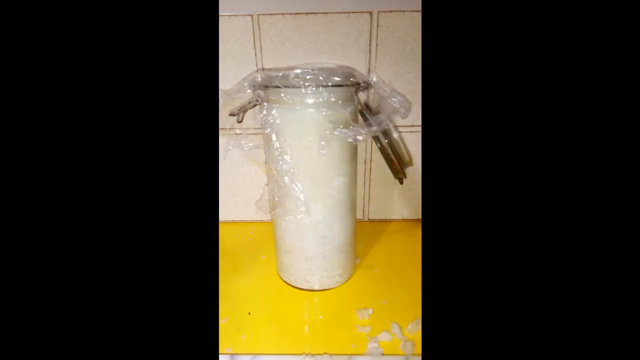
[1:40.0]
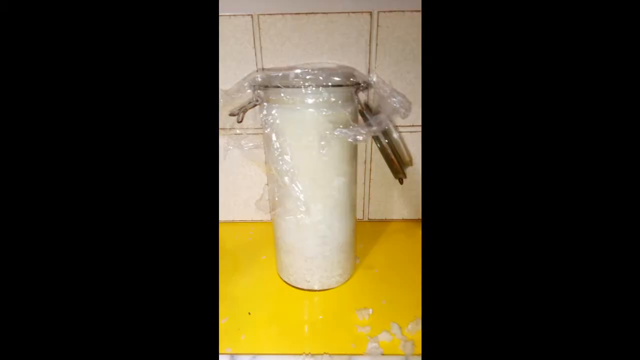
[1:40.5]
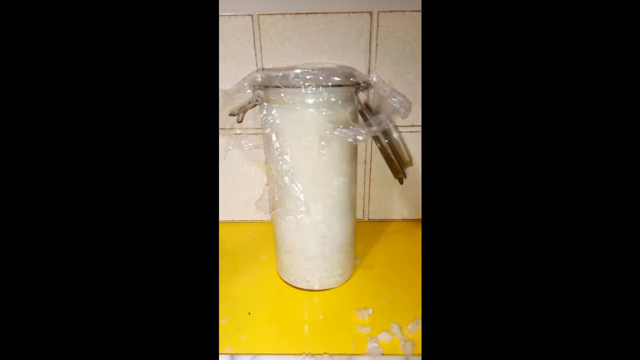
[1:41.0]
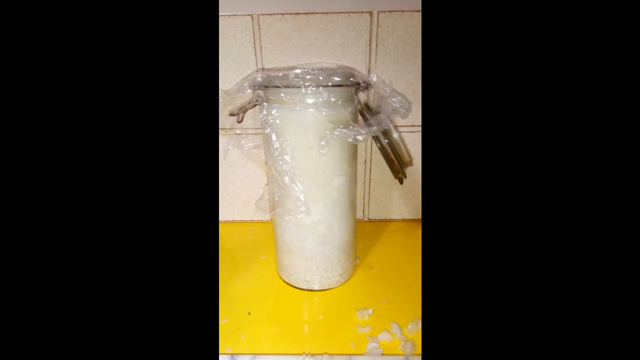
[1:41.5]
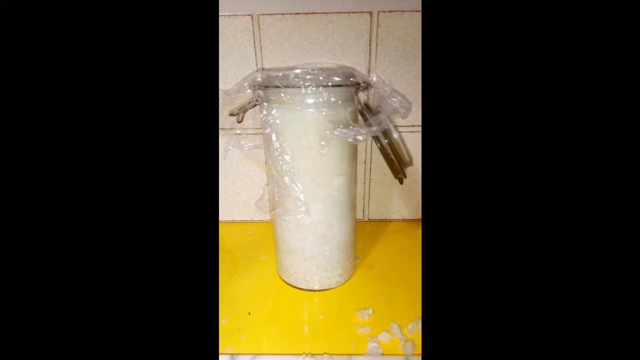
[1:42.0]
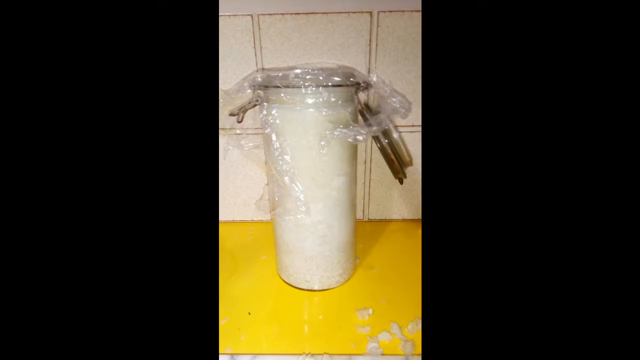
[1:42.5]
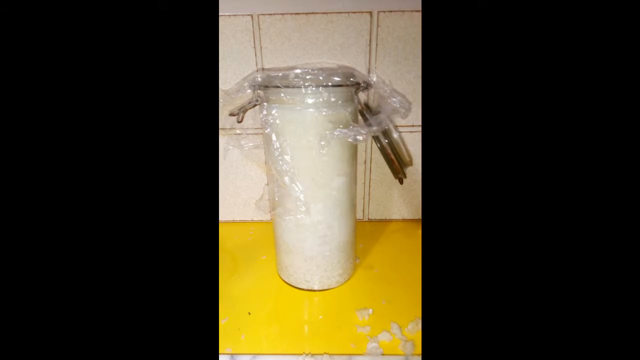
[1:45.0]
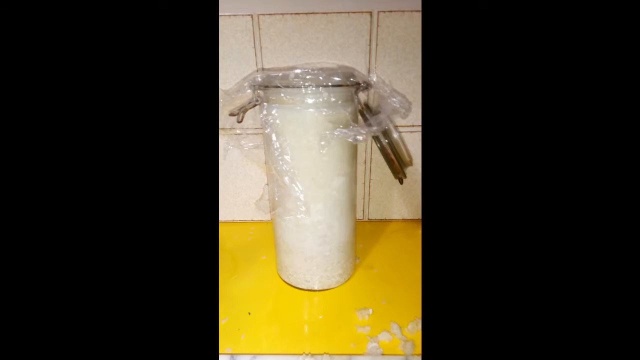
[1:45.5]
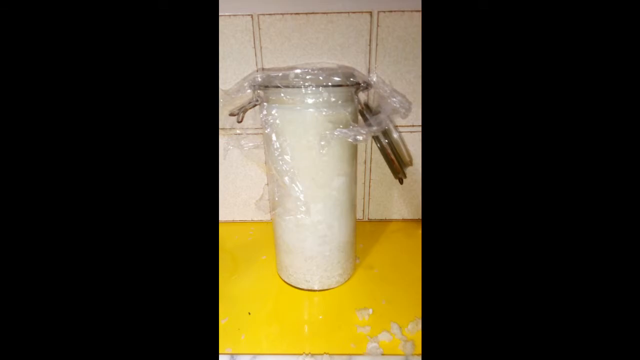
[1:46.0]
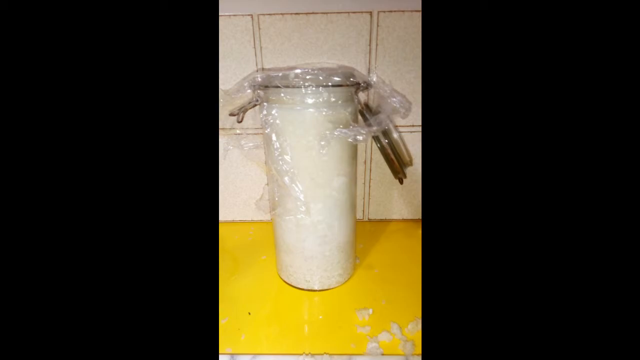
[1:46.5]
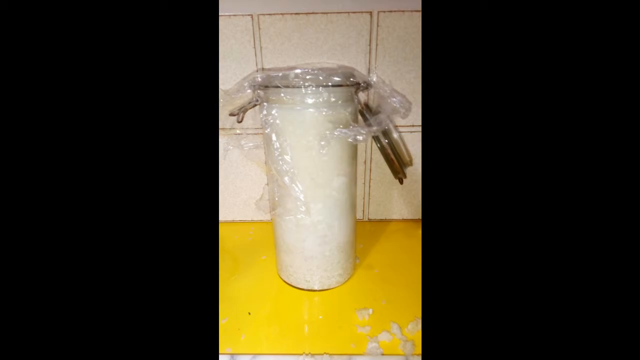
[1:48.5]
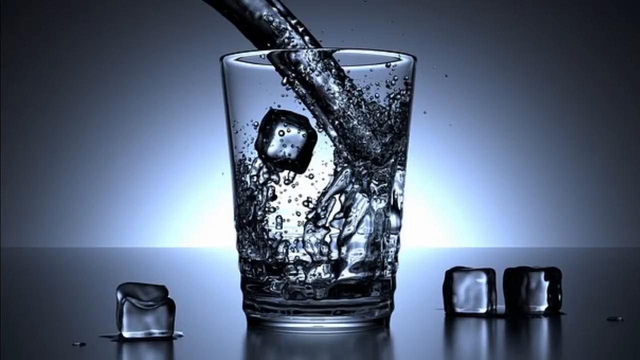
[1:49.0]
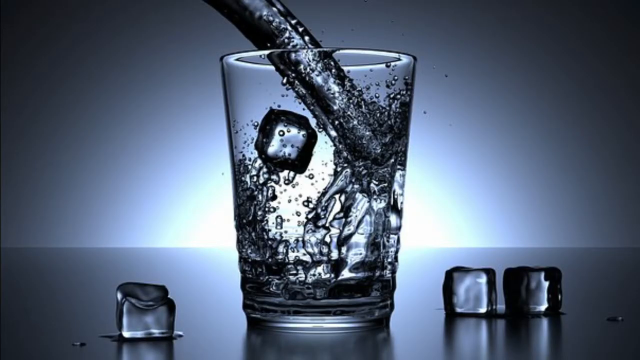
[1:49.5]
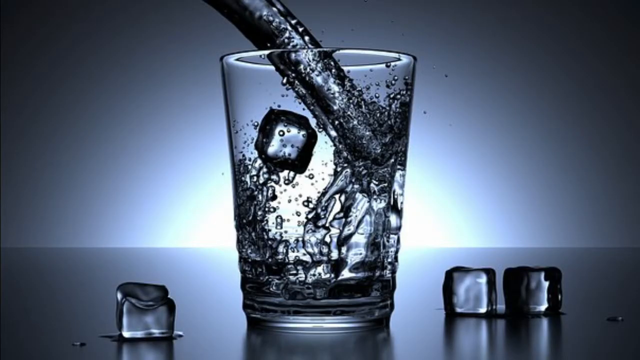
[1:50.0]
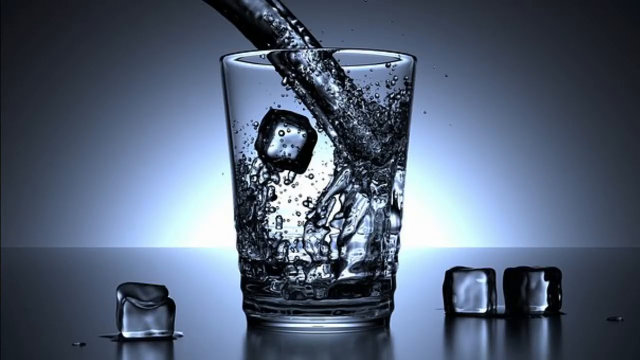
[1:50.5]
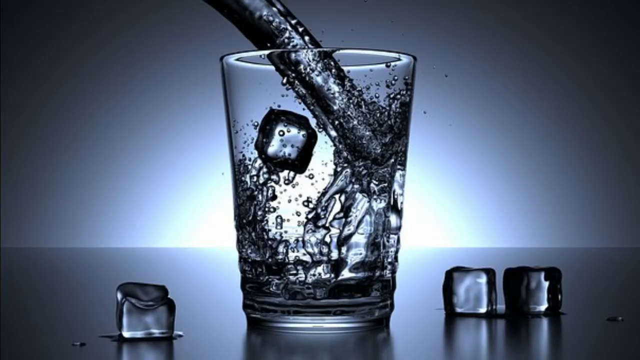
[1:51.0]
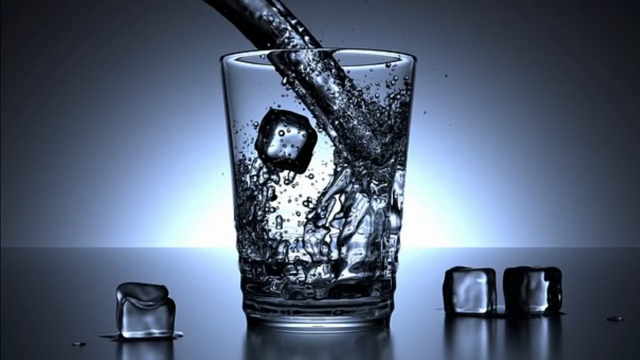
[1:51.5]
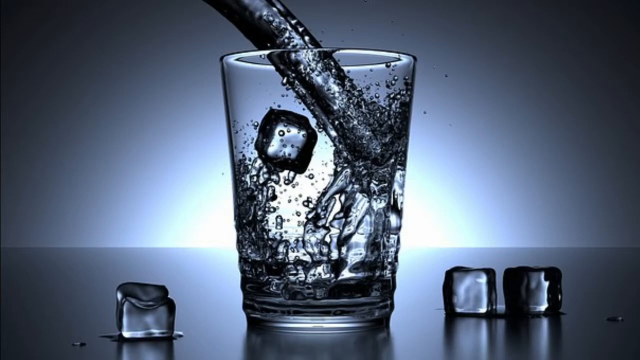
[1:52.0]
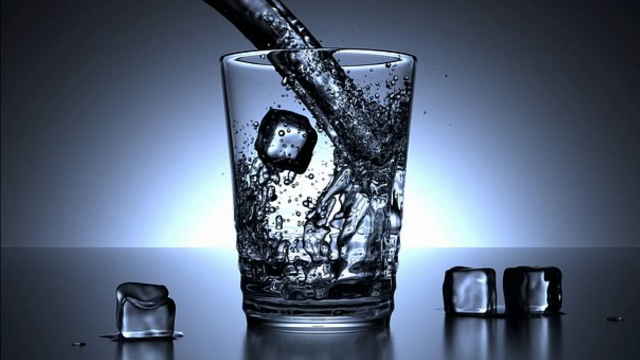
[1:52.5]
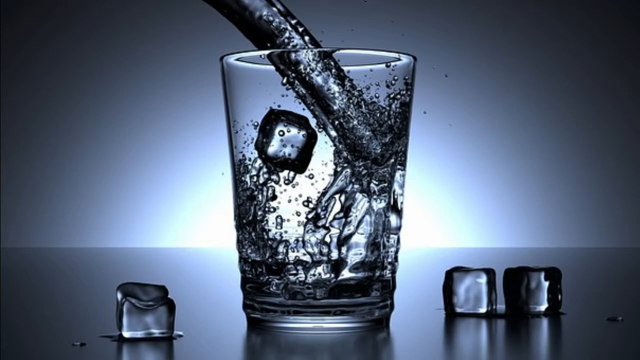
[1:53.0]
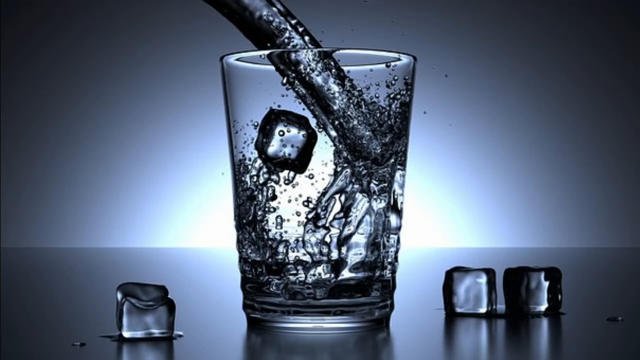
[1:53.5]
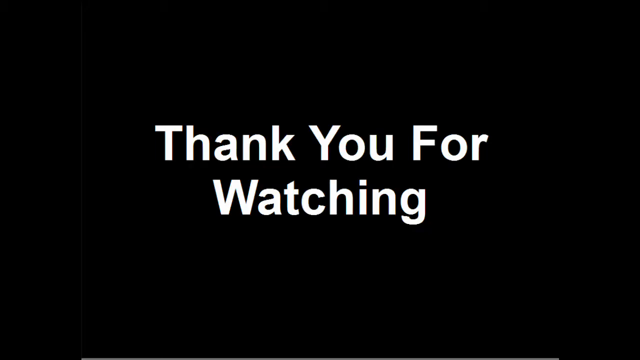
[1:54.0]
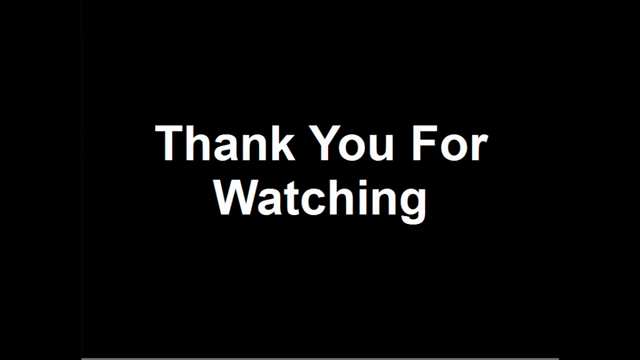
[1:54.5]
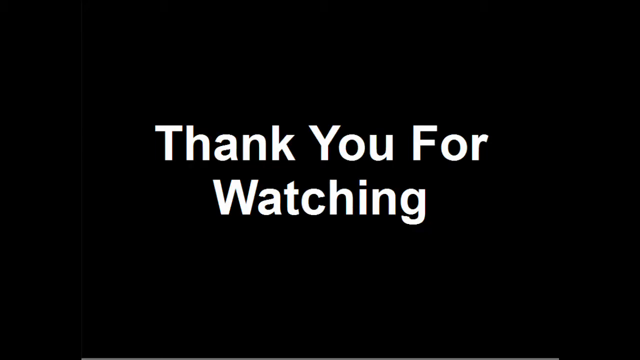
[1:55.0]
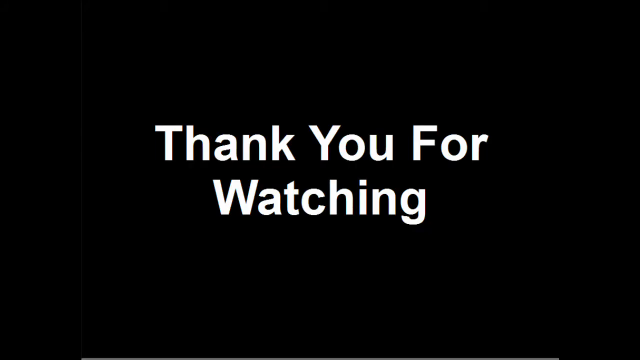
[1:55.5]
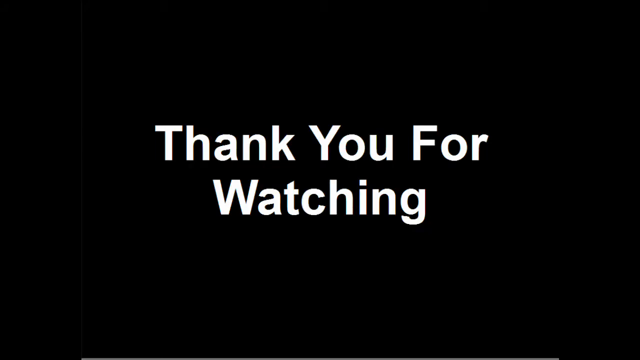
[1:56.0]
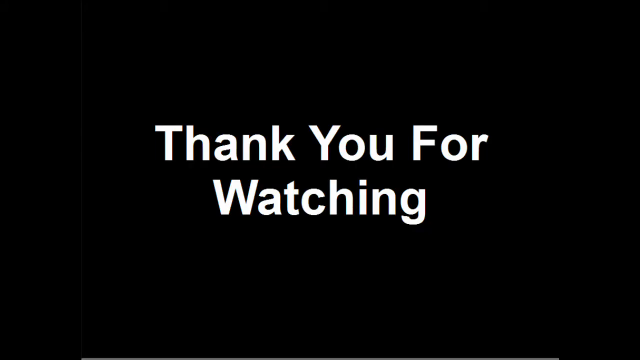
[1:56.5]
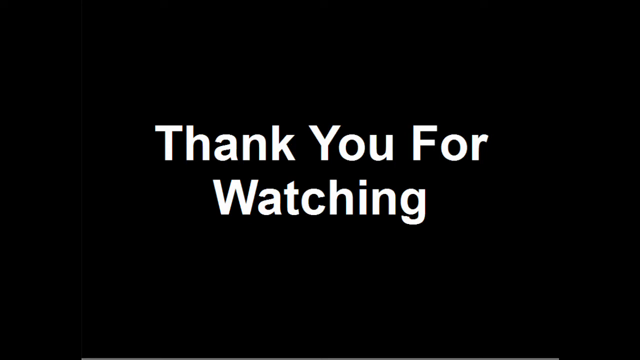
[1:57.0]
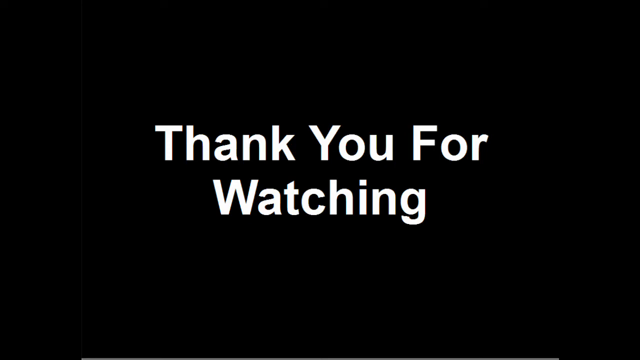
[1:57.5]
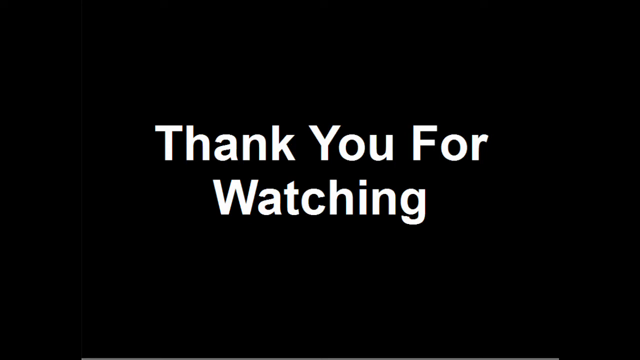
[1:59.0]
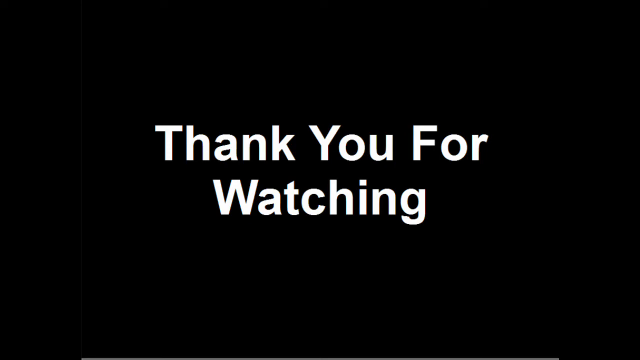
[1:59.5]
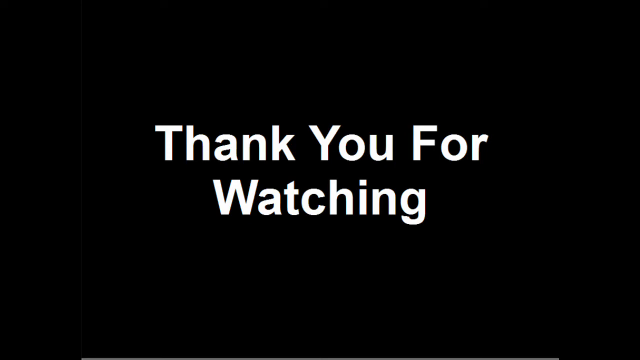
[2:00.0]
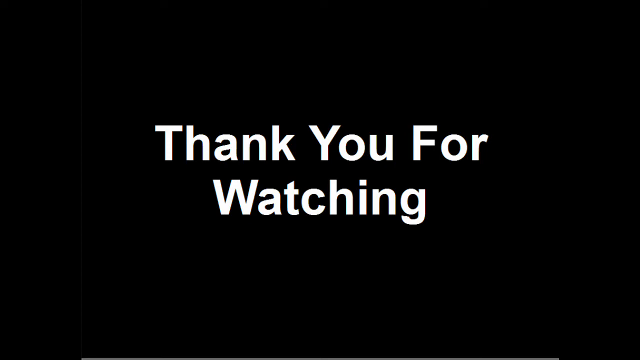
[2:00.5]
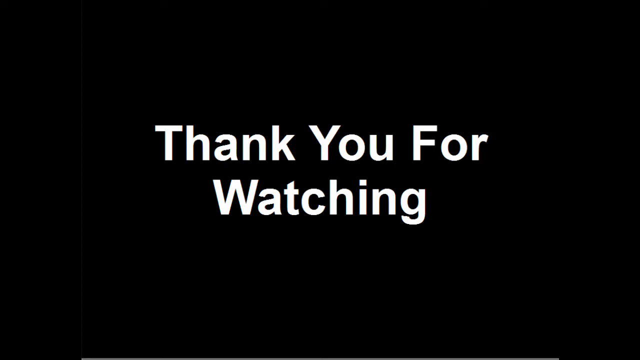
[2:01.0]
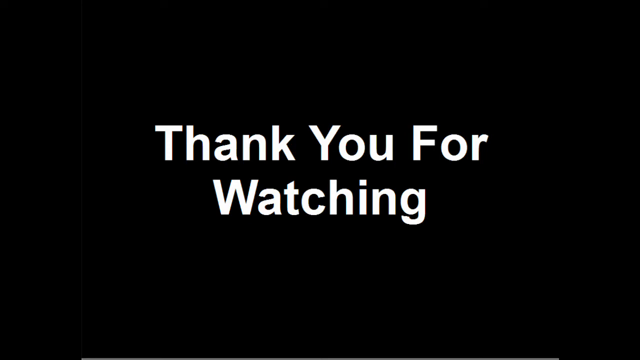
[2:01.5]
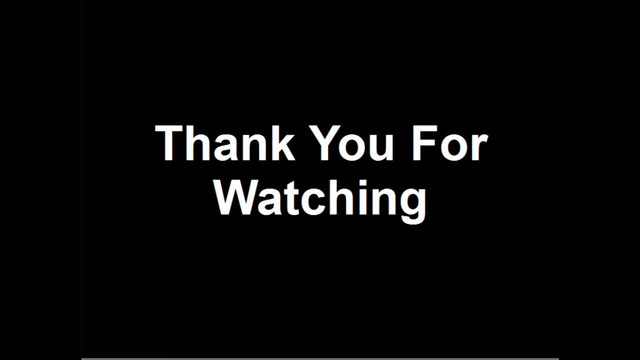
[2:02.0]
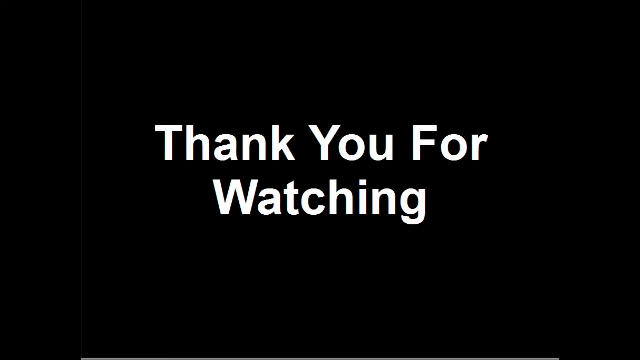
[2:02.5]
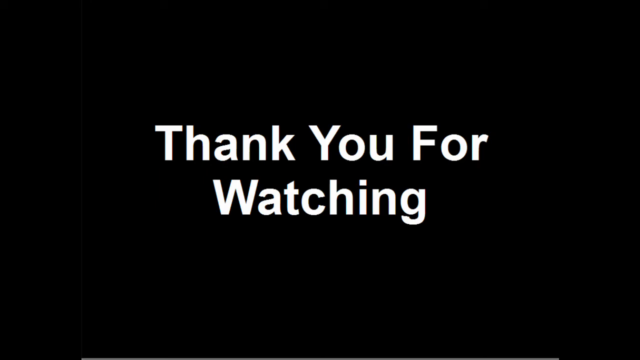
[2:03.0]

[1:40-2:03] The container holds the new mixture, the liquid apparently mixed with a yeast packet, back inside with the locking lid on top. Next, water goes into a glass with ice cubes, followed by the text "thank you for watching."